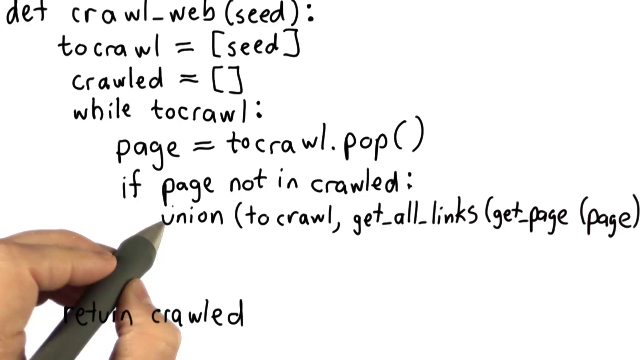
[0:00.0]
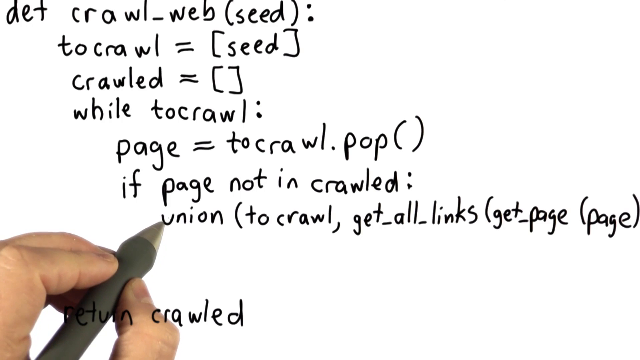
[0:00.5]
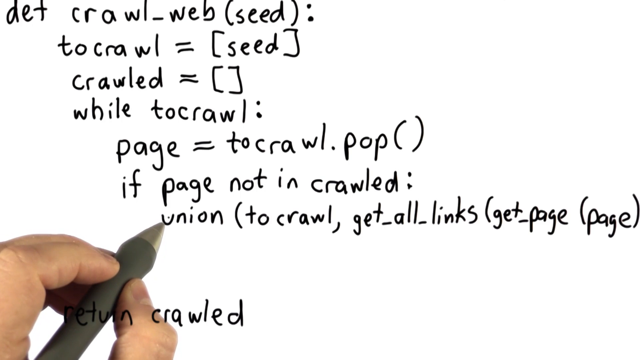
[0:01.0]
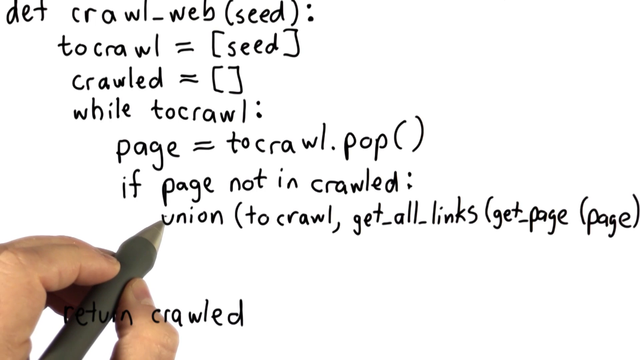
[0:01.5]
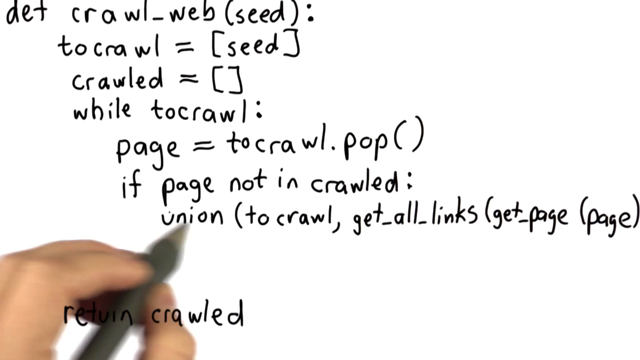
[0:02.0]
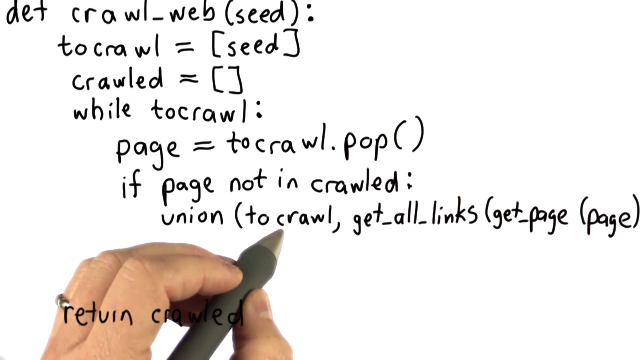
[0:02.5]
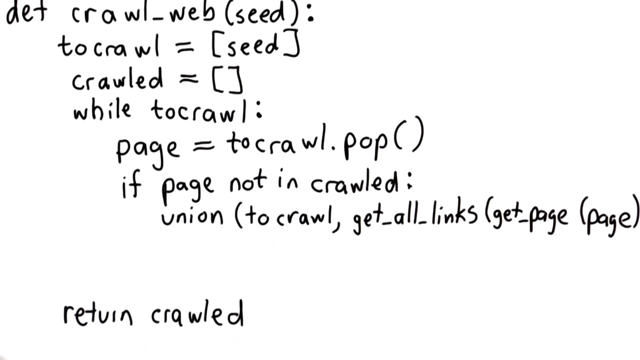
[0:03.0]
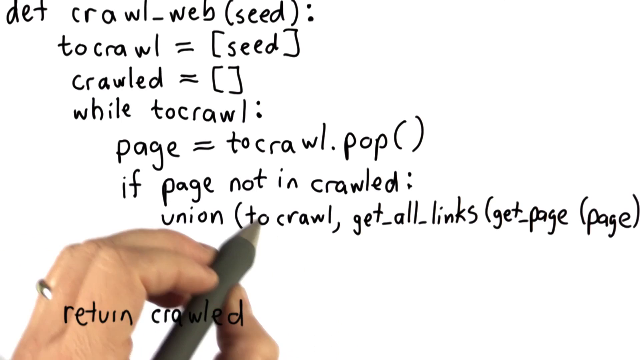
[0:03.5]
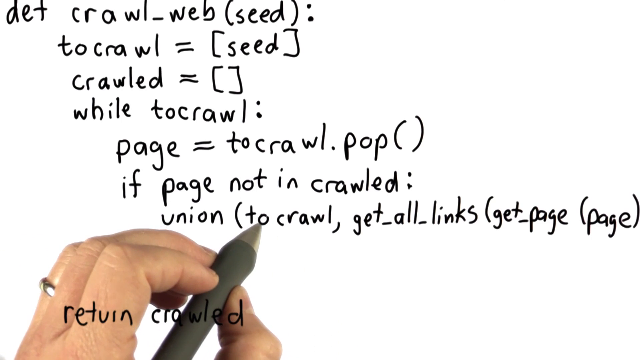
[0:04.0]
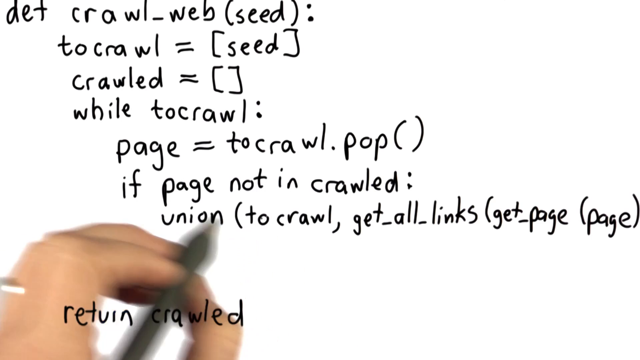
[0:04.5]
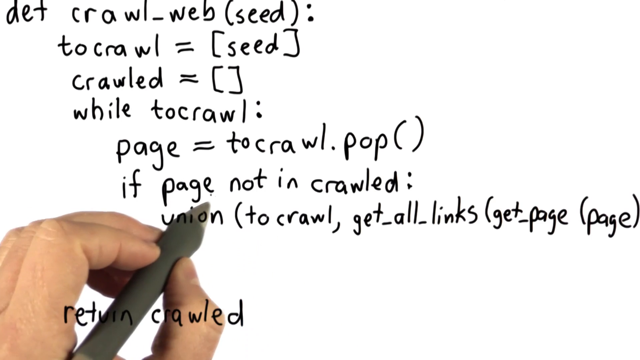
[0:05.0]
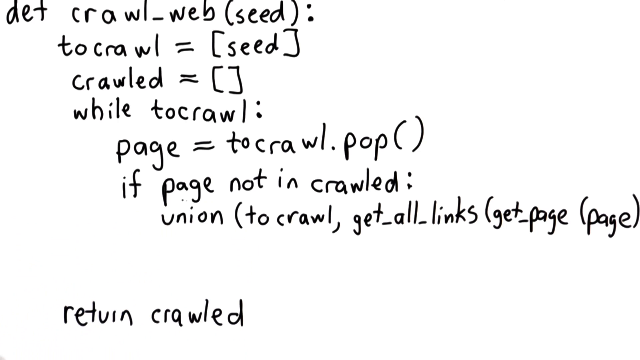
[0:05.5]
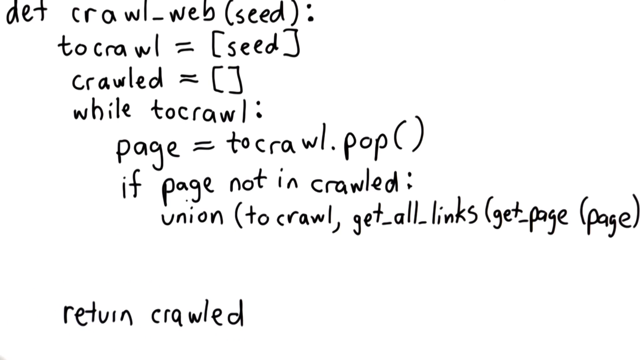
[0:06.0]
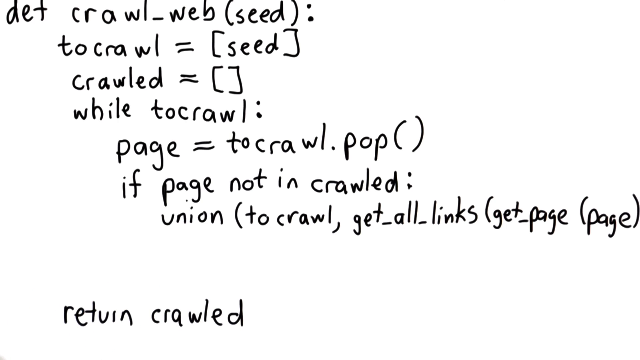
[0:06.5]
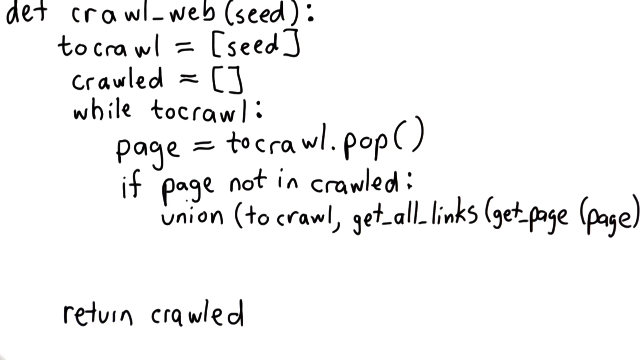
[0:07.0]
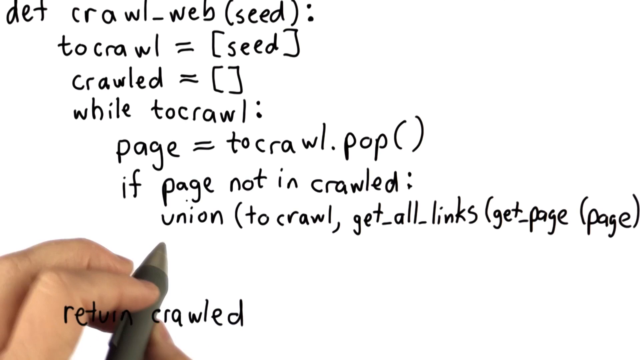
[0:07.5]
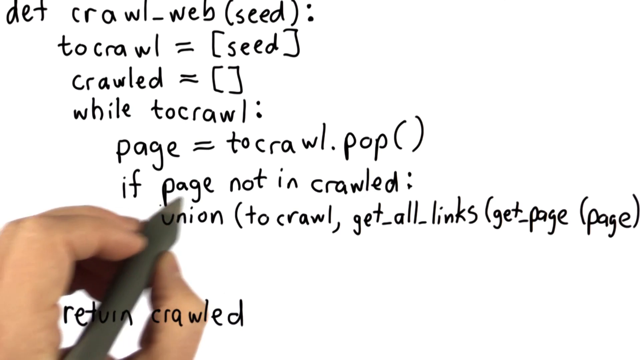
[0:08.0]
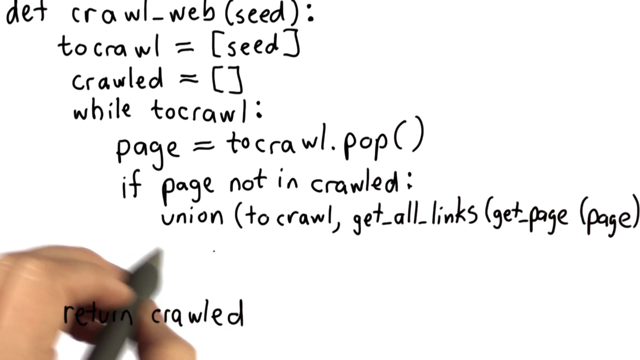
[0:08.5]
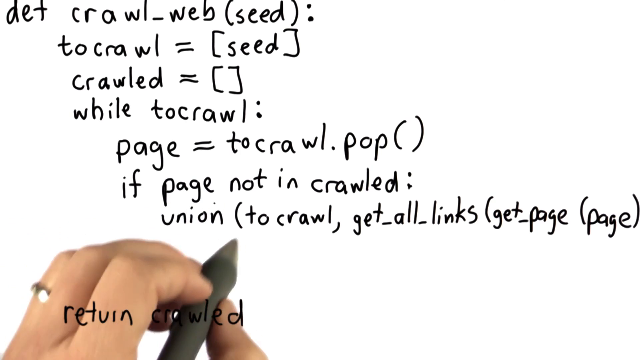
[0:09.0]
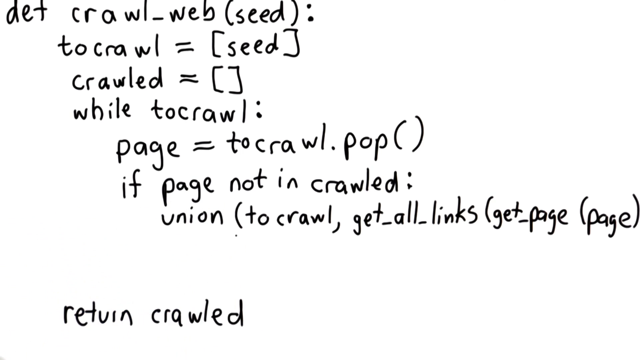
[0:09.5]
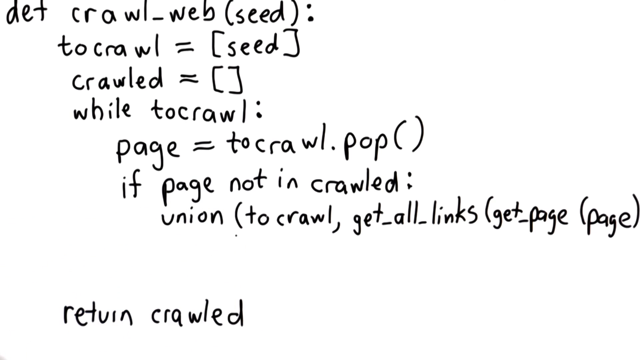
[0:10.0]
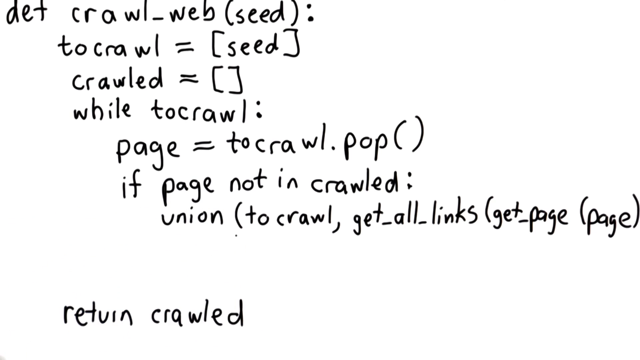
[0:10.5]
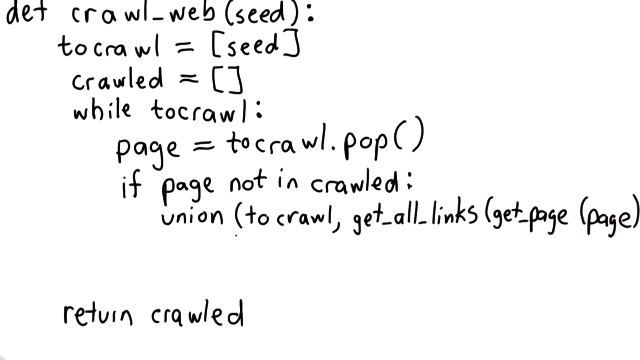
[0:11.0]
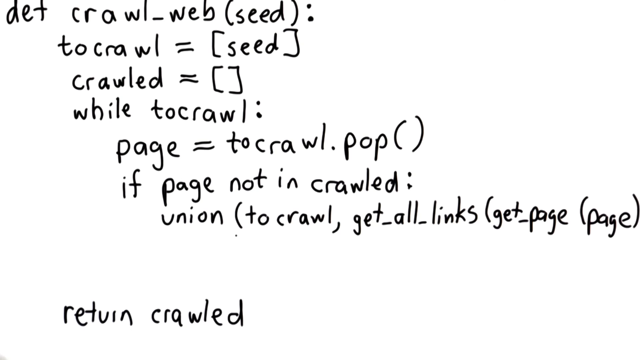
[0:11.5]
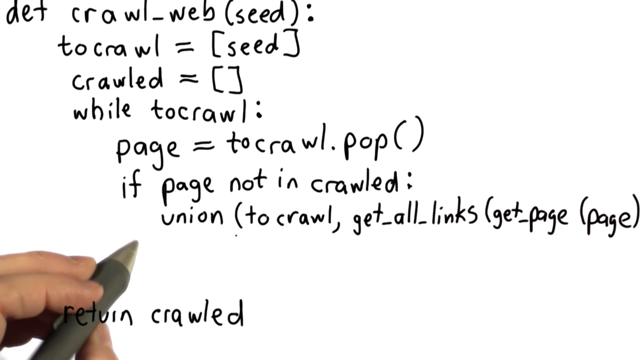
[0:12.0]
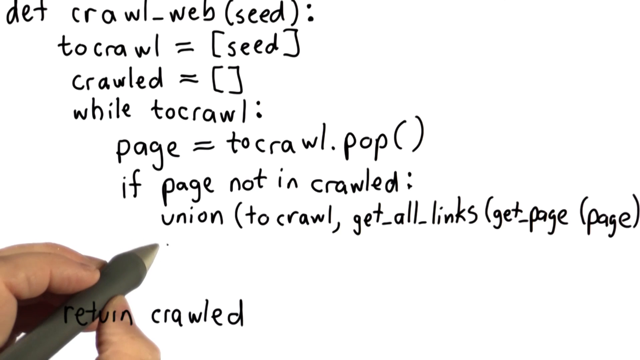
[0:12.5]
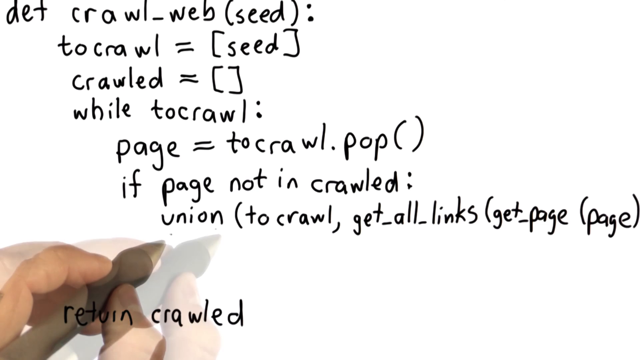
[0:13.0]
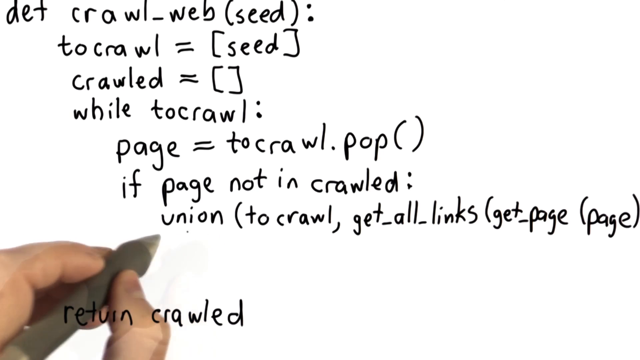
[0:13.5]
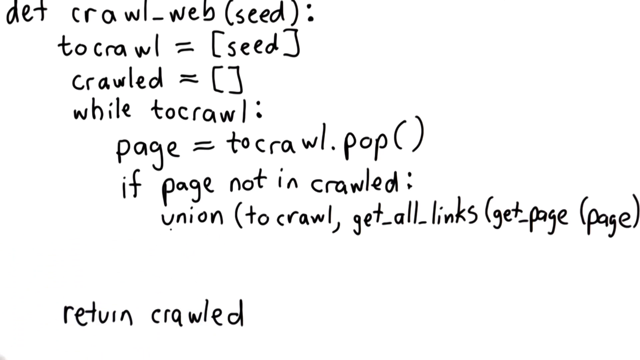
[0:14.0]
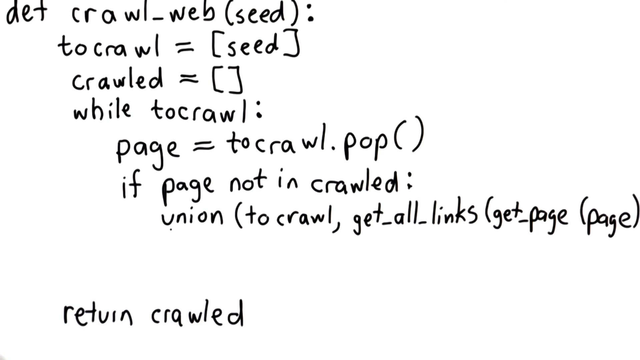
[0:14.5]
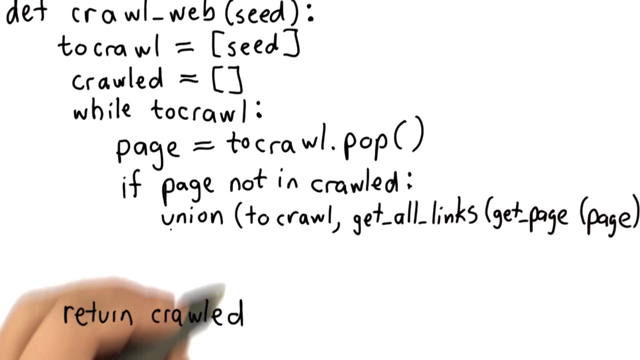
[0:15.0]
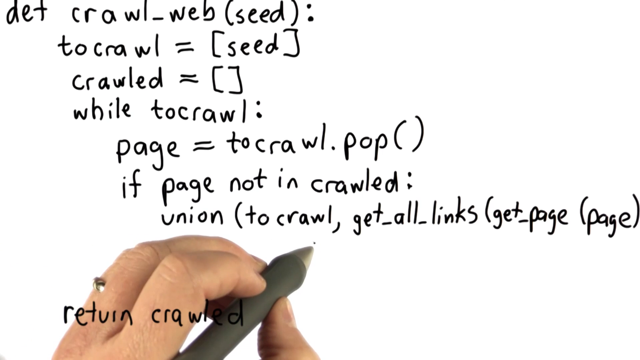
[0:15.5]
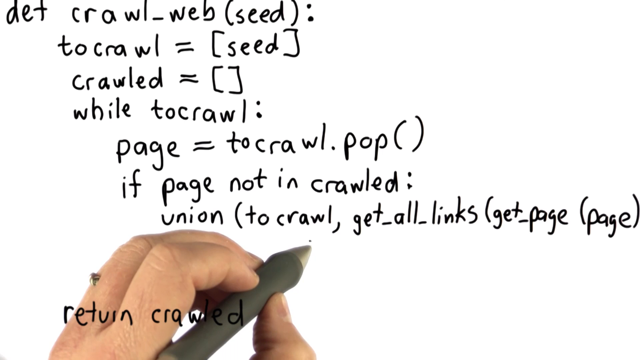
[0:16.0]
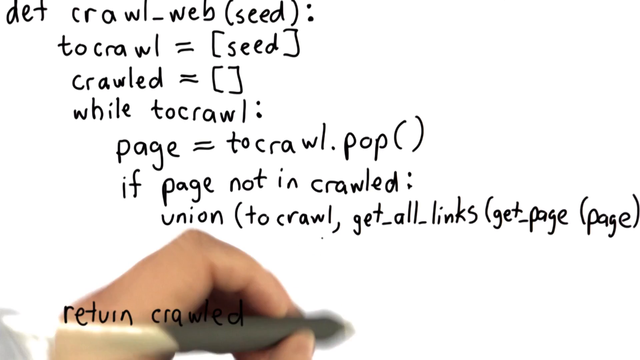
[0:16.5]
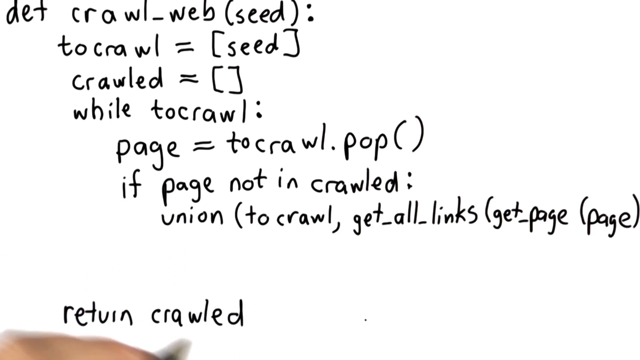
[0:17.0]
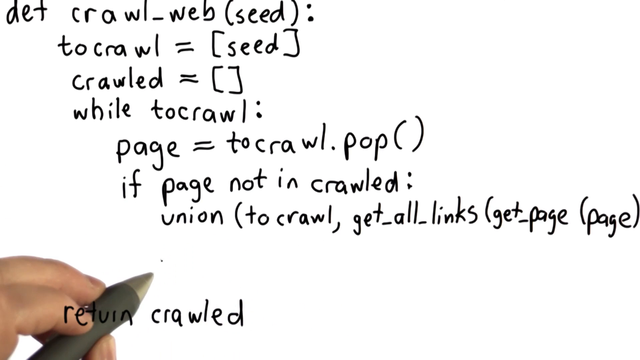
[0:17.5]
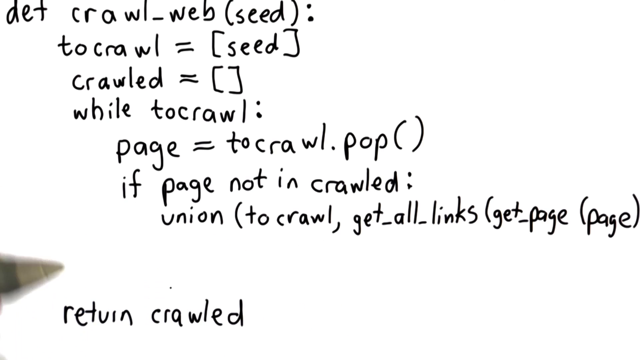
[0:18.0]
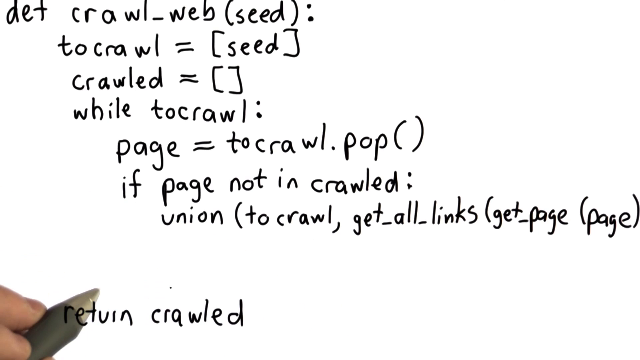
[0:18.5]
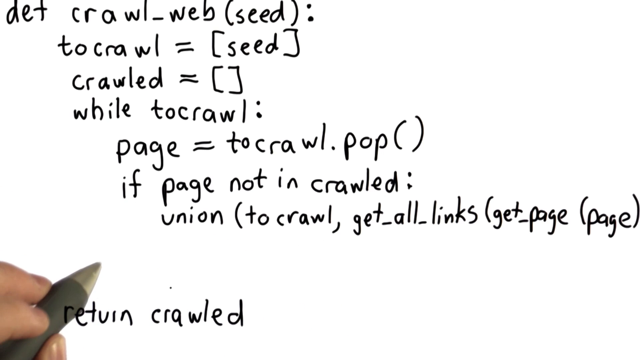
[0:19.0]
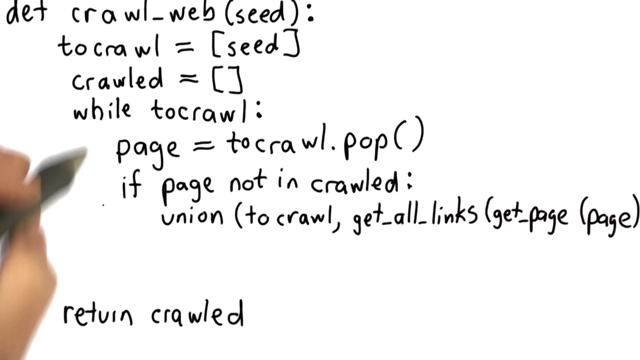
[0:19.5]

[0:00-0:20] A user holds a black pen over several lines already written. The first line reads "DETCRAWL_web" with the word "seed" in parentheses. The next line reads "DETCRAWL =" with "seed" in parentheses again. The third line reads "CRAWLED =" followed by just parentheses. The fourth line reads "WHILE DETCRAWL". The following line reads "PAGE equal to CRAWLED.POP" followed by parentheses. The next line reads "if PAGE not in CRAWLED", and the last line reads "UNION" followed, in parentheses, by "DETCRAWL, GET ALL LINKS", then "GET PAGE" in parentheses, and "PAGE" in parentheses again. The user seems to emphasize the word "UNION" with the black pen, sort of circling it without marking it. The user seems to put a lot of emphasis on the last line, as if it were the result being sought. Then the user stops, with the word crawl emphasized.